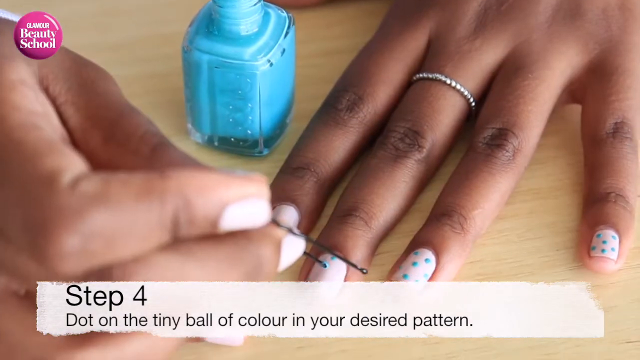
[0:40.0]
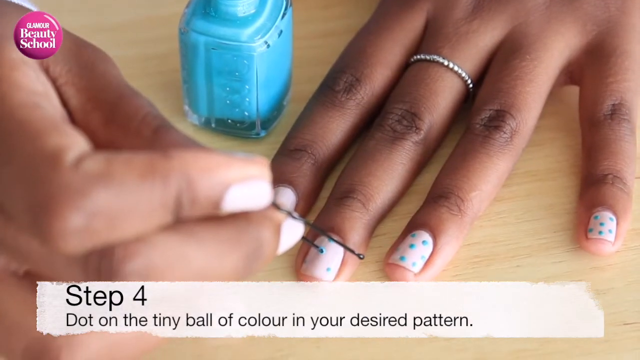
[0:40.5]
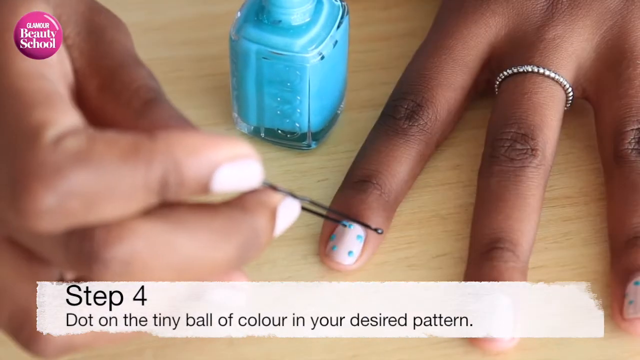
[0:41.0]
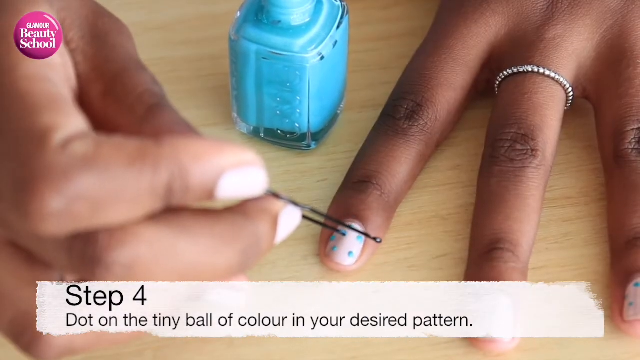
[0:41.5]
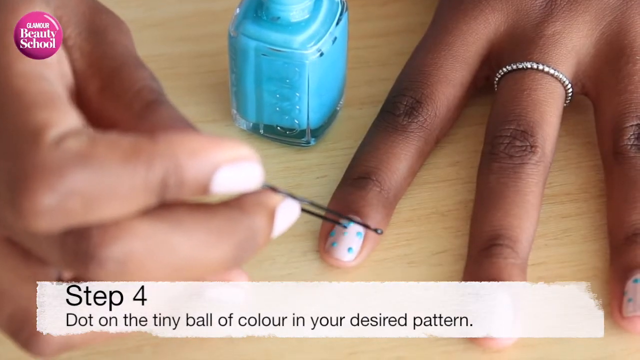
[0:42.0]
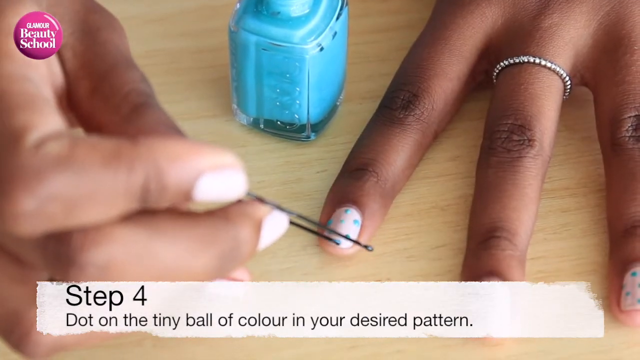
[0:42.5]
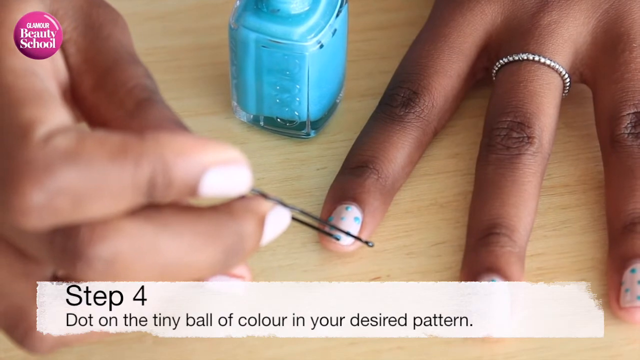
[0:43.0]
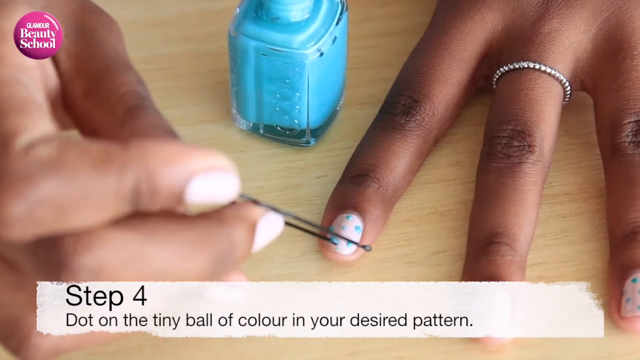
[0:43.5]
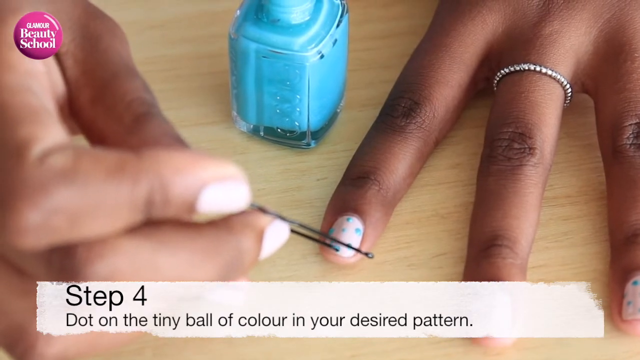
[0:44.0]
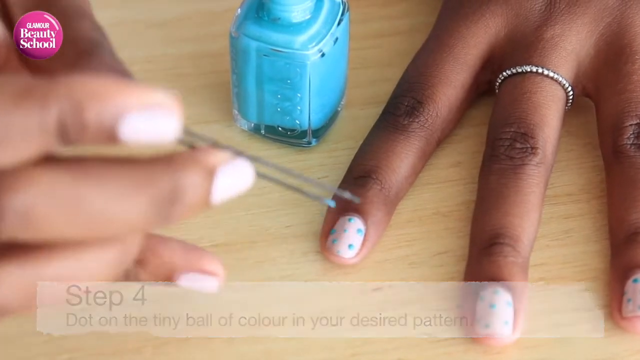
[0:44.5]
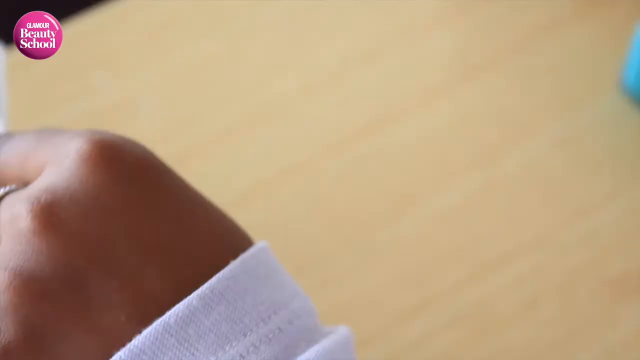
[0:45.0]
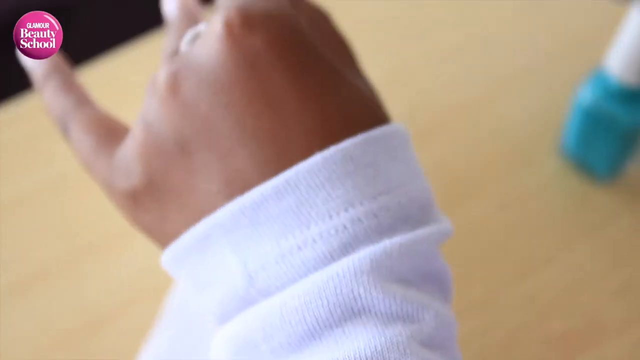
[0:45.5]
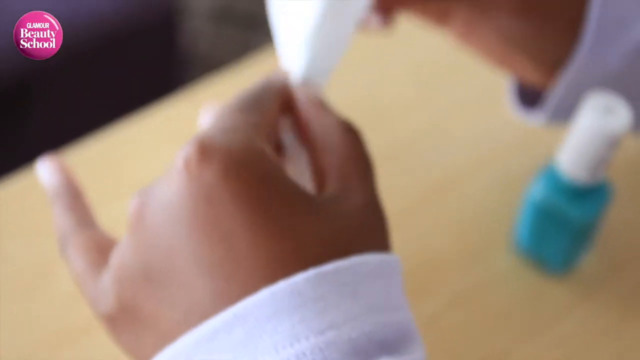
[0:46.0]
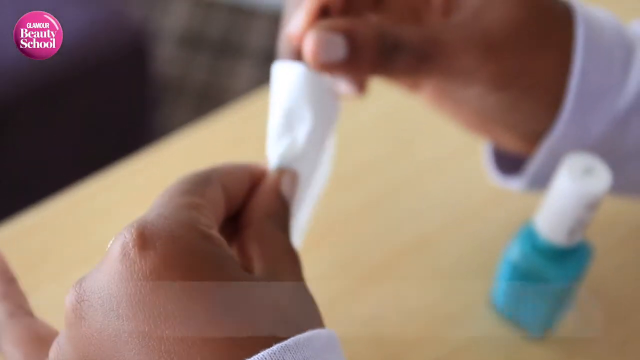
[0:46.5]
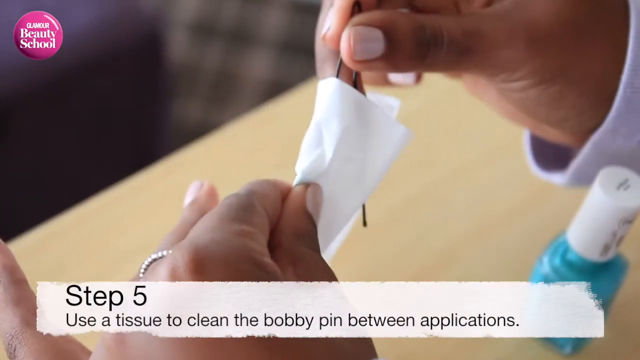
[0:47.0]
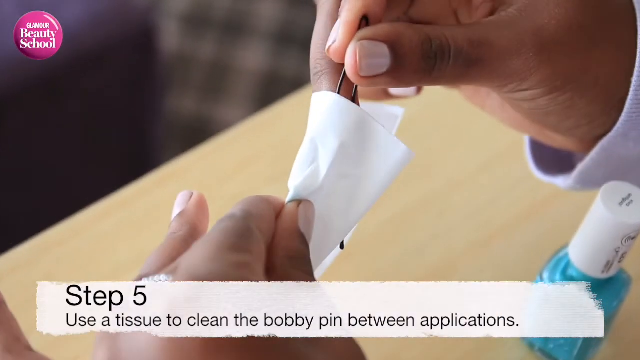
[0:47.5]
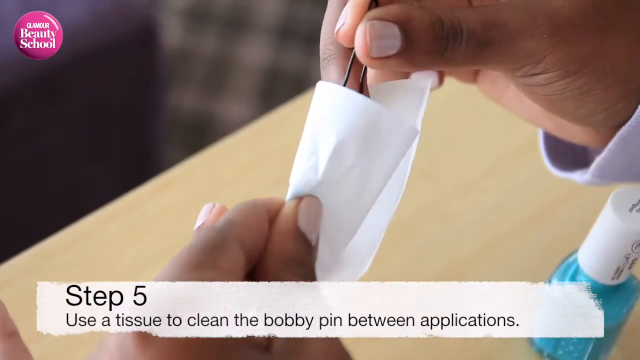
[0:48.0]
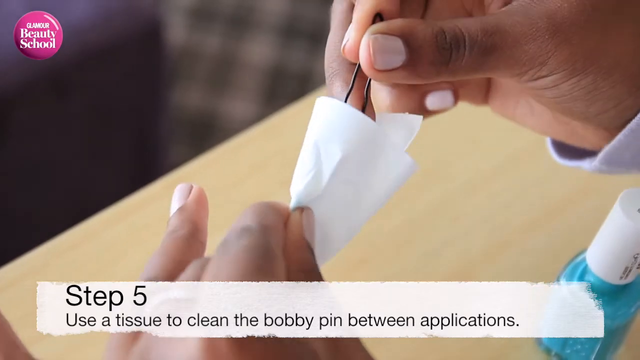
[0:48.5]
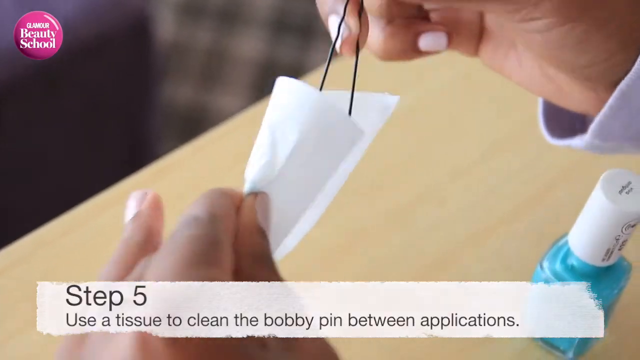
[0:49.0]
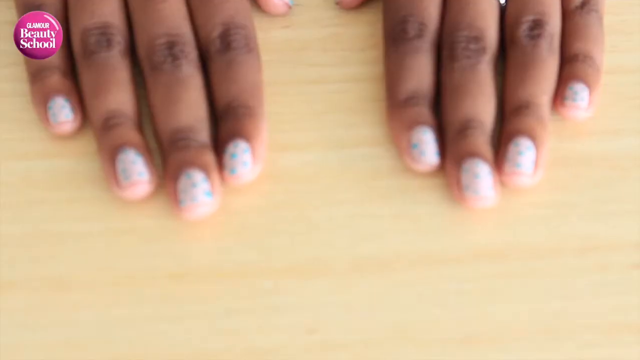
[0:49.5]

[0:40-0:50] Leslie Mathis continues with the nail art, which involves placing dots onto already polished nails. A bright turquoise bottle of nail polish is on the table. Leslie takes the bobby pin dipped in the turquoise polish and places turquoise dots on her light pink nail polish. On the hand placing the dots, she wears a simple diamond band on her middle finger. Step four reads: "dot on the tiny ball of color in your desired pattern."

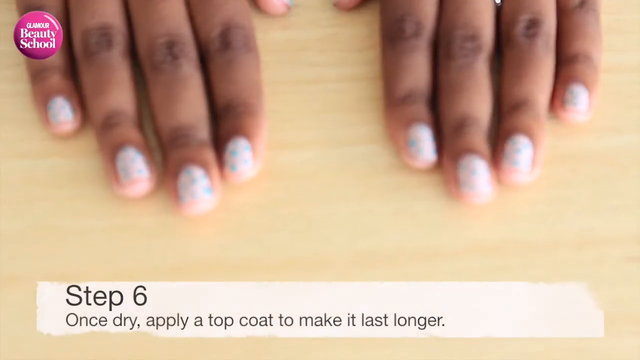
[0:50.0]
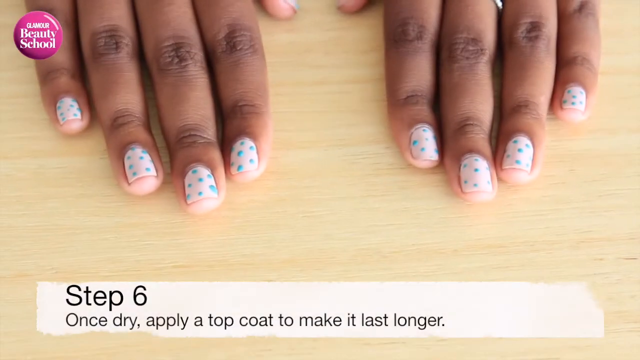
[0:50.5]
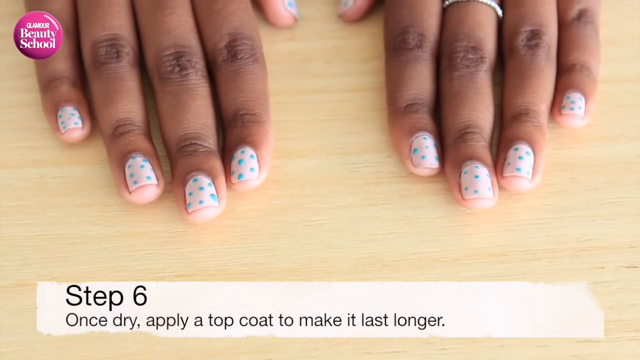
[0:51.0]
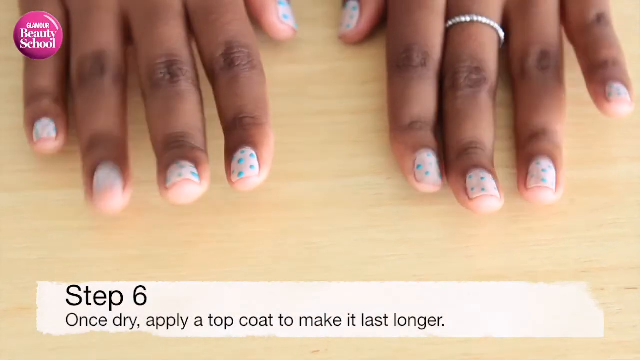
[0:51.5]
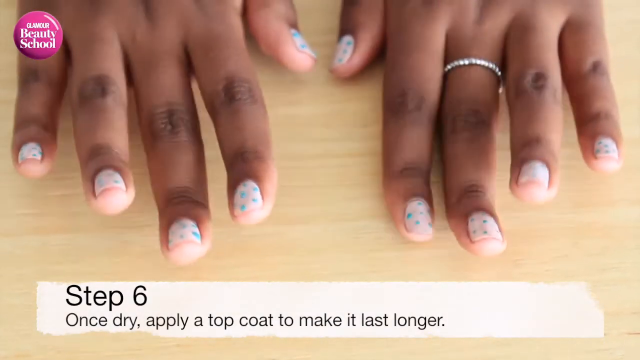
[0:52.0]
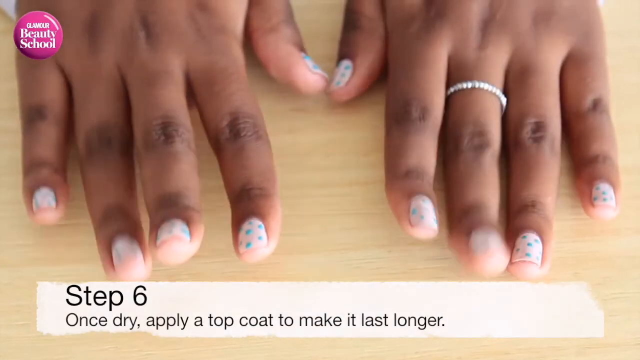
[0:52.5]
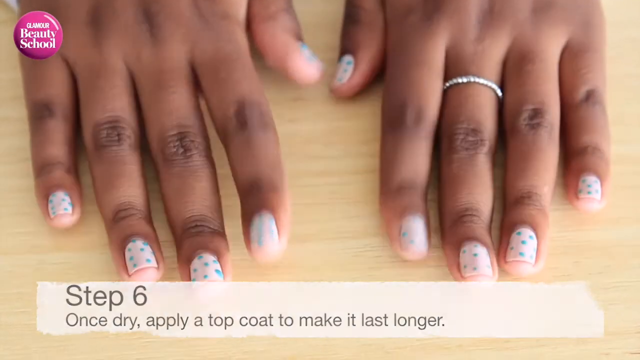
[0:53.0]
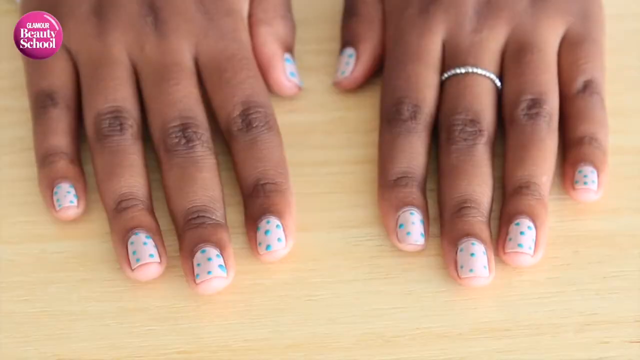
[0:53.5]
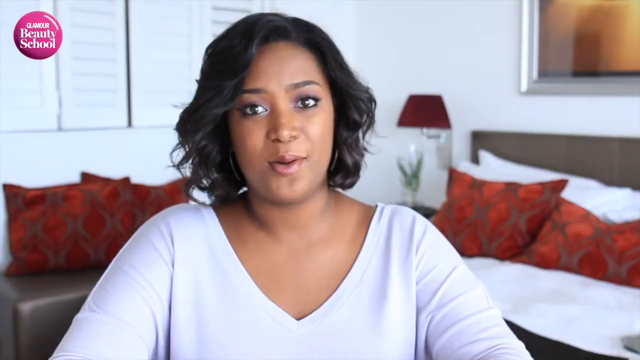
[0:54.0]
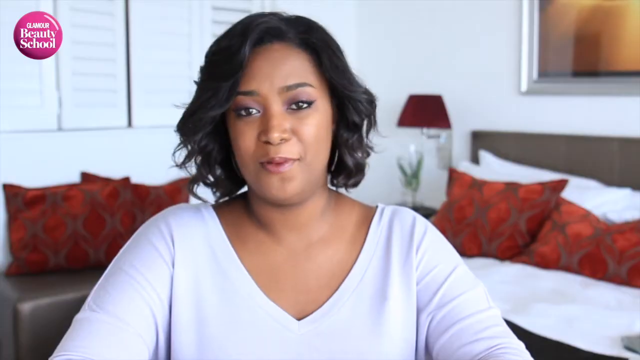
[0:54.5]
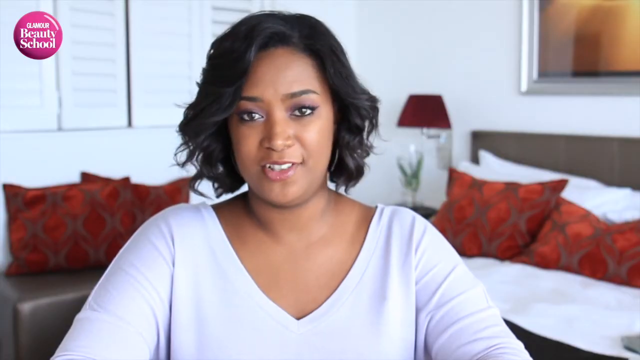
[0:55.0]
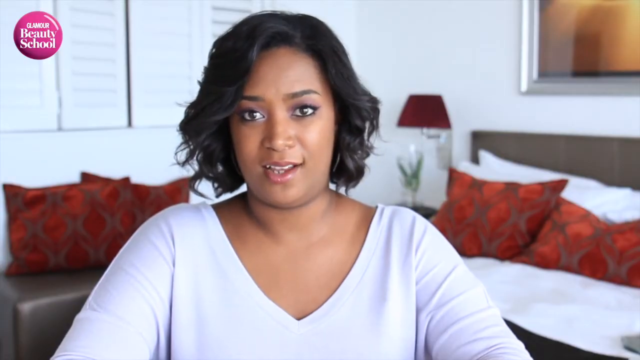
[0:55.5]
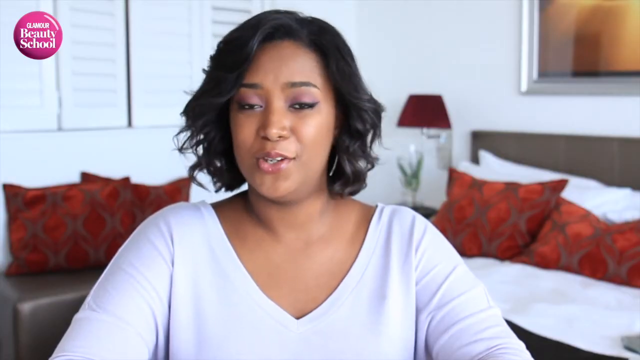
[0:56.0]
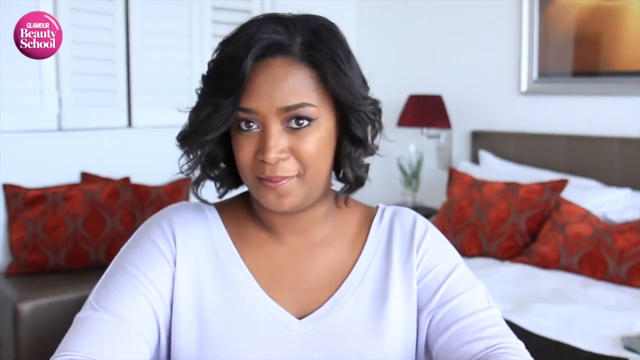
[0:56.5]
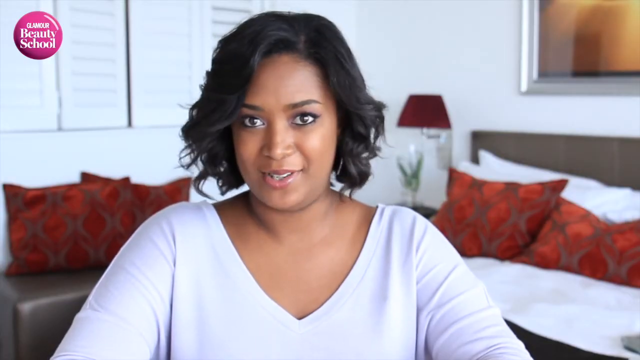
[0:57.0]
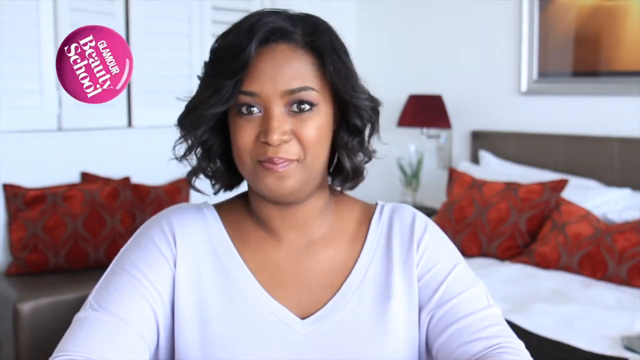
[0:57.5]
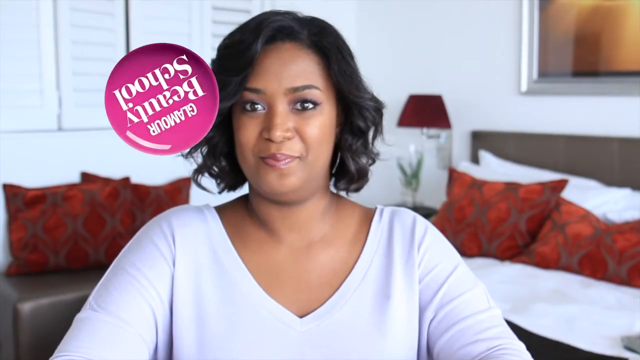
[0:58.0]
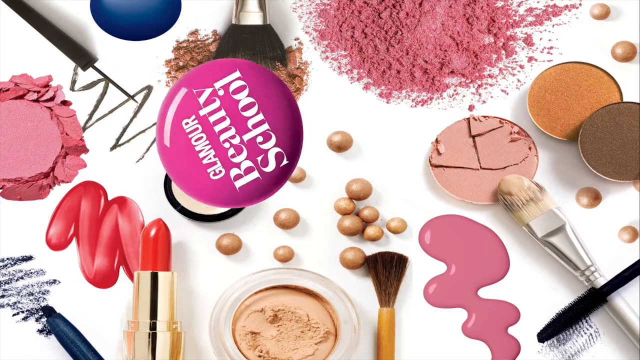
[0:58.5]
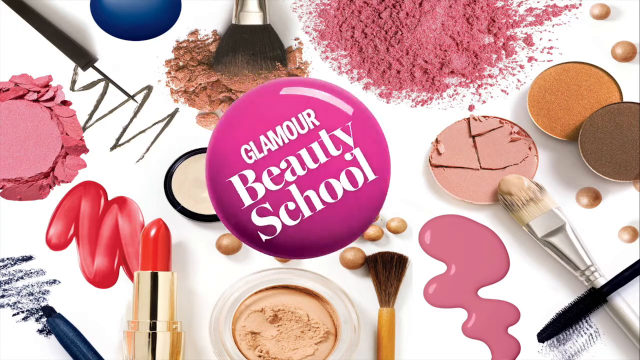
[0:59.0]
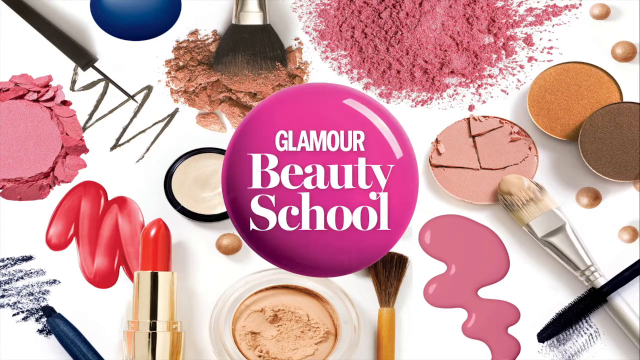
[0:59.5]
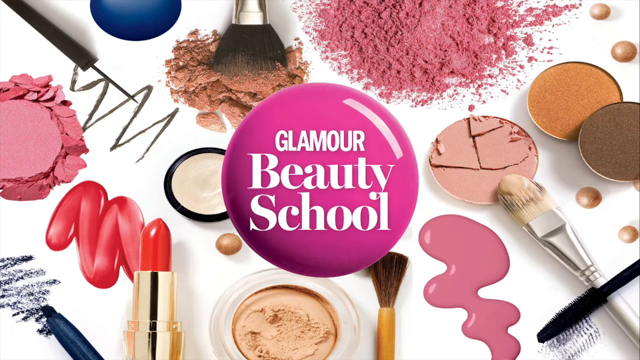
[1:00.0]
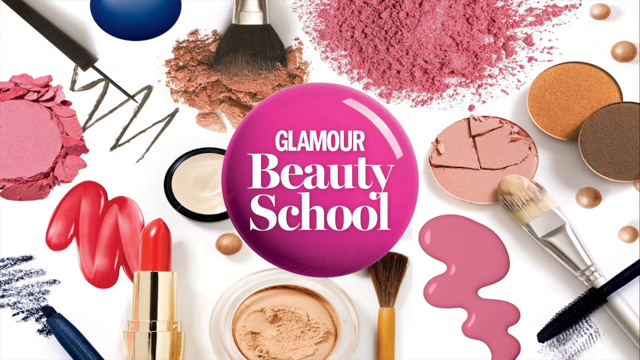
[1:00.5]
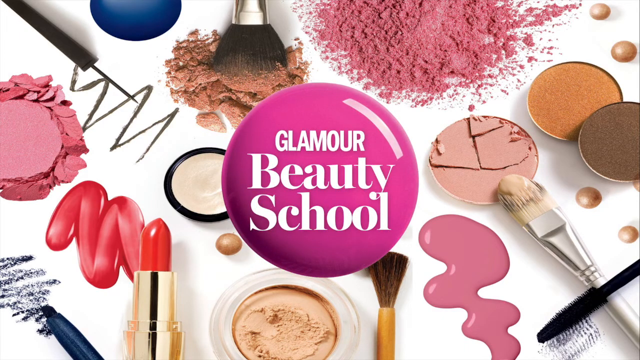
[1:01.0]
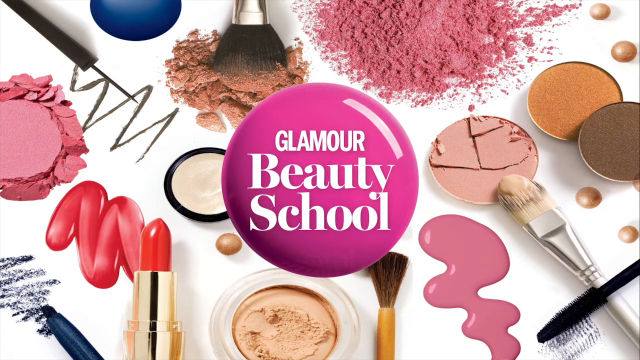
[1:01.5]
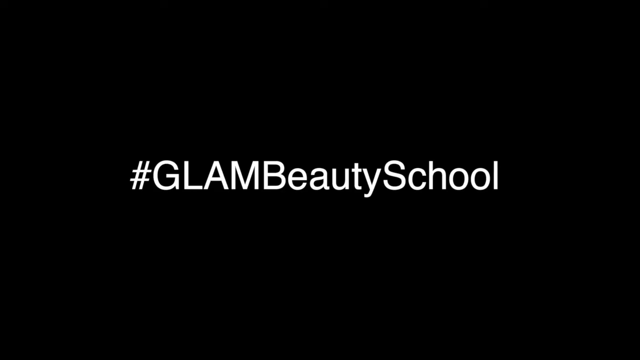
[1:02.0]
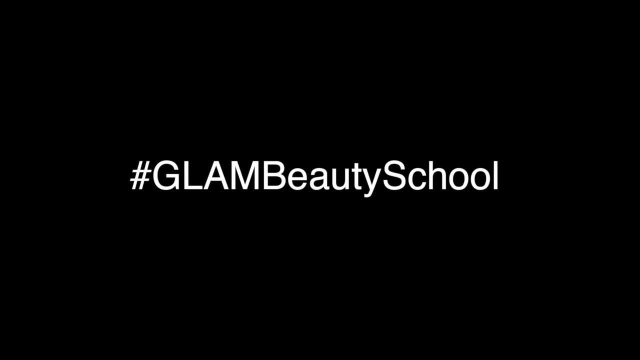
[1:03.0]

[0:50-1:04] The finished result is shown: Leslie has her hands on the table, displaying bright turquoise dots on her light pink nails. At the bottom of the screen, step six reads: "once dry, apply a top coat to make it last longer."